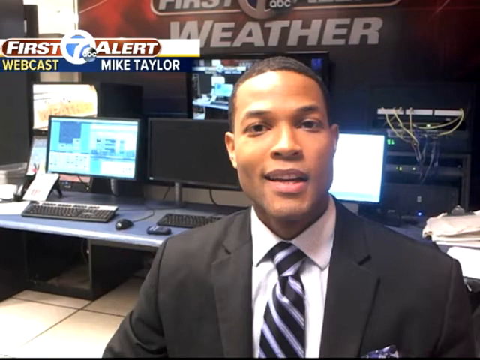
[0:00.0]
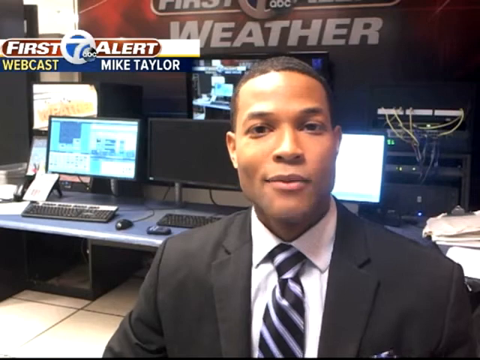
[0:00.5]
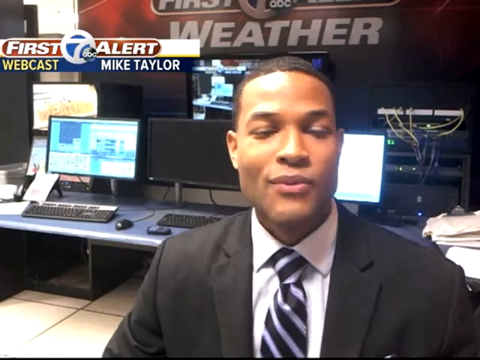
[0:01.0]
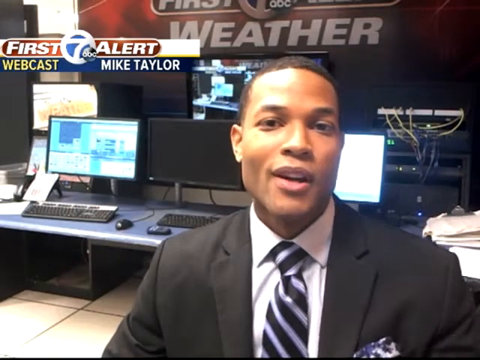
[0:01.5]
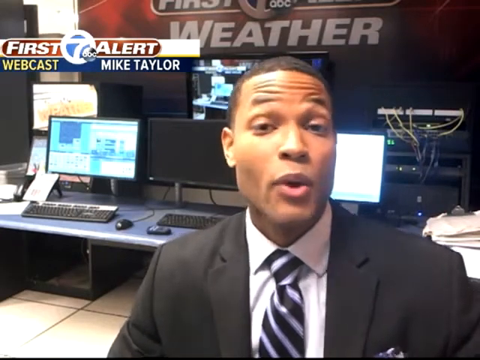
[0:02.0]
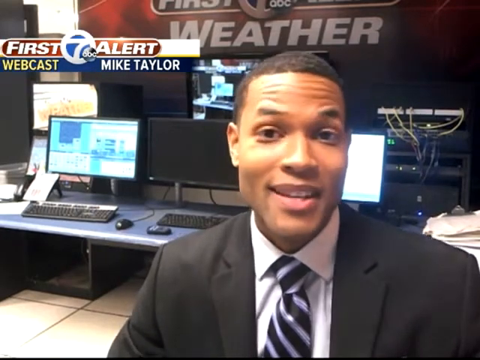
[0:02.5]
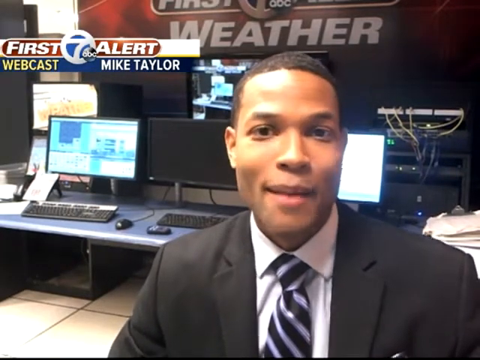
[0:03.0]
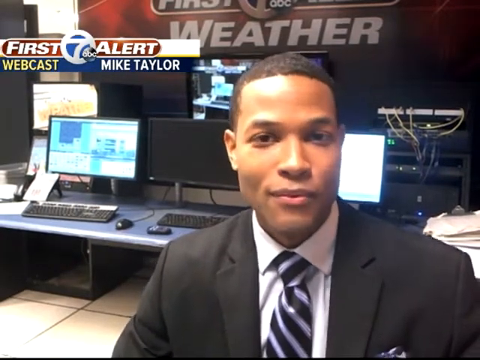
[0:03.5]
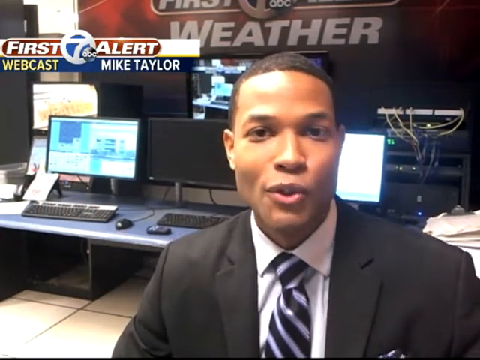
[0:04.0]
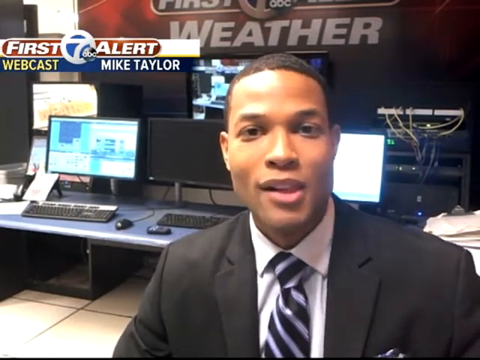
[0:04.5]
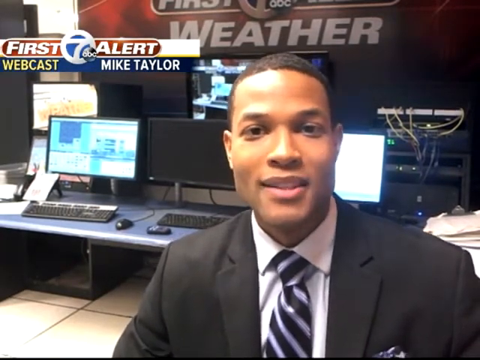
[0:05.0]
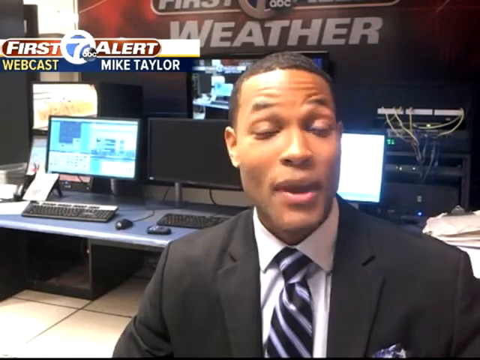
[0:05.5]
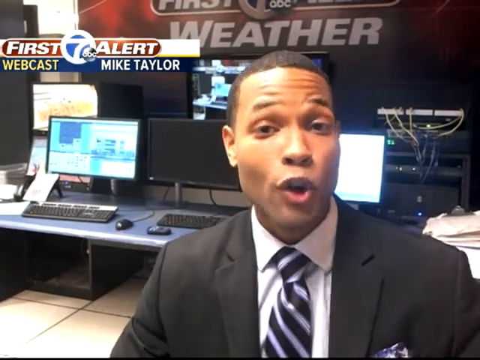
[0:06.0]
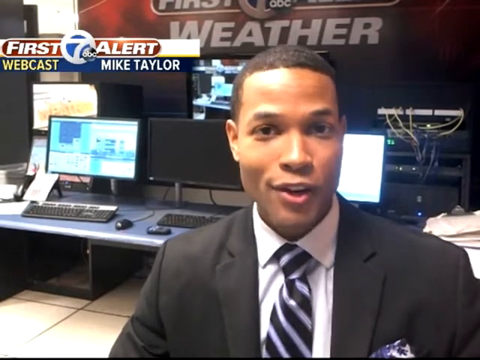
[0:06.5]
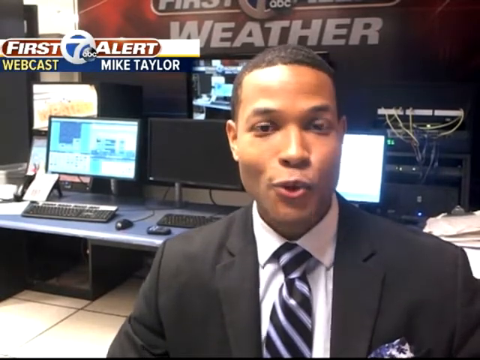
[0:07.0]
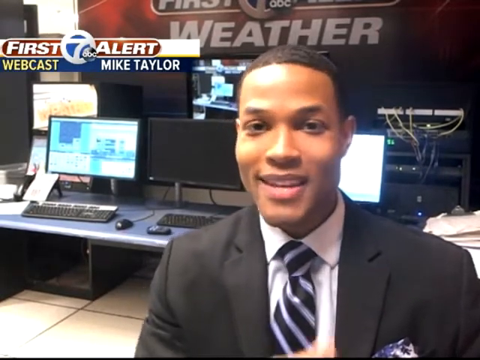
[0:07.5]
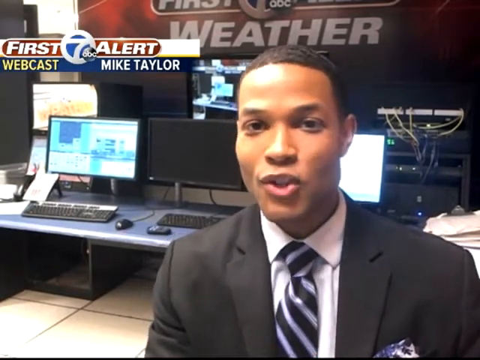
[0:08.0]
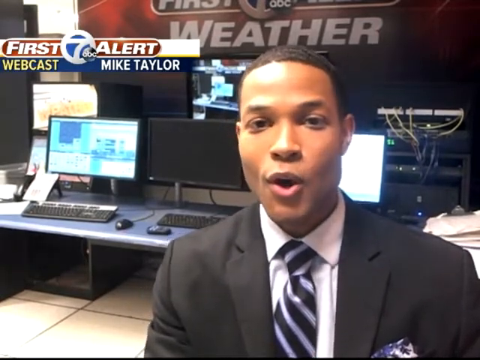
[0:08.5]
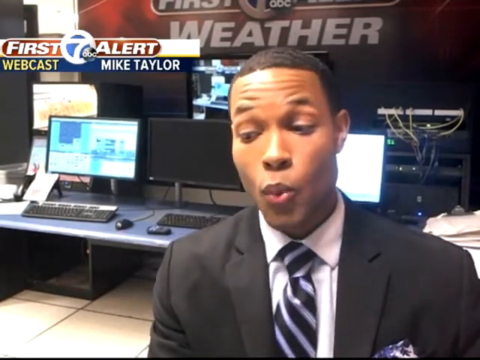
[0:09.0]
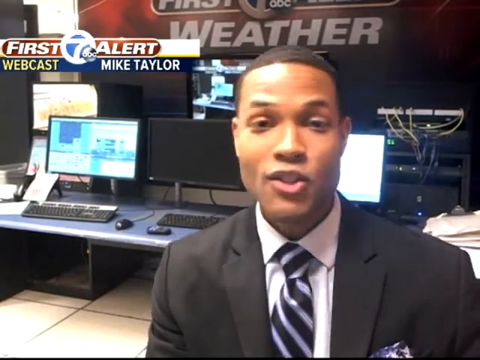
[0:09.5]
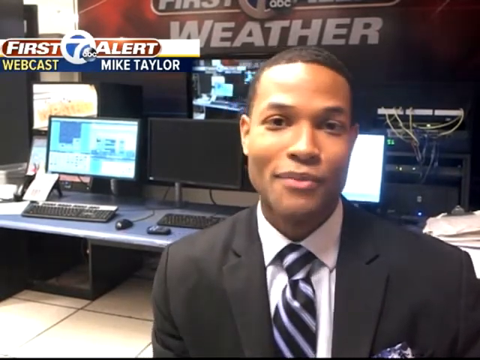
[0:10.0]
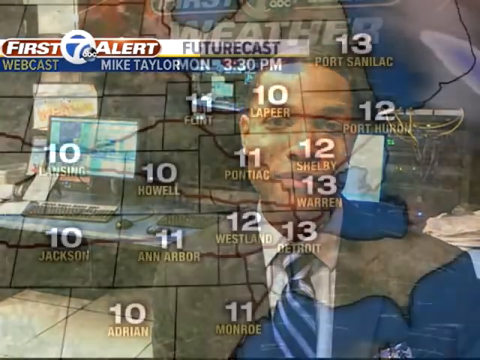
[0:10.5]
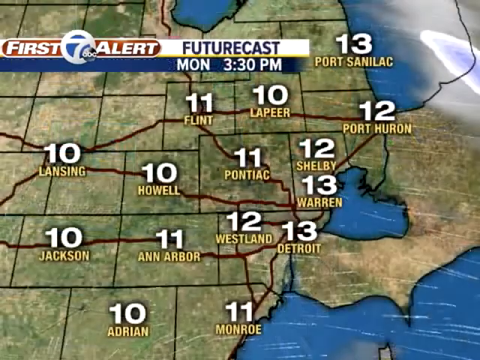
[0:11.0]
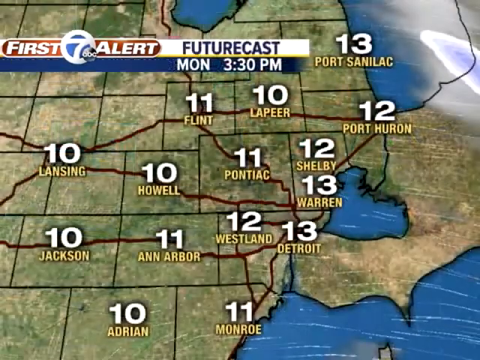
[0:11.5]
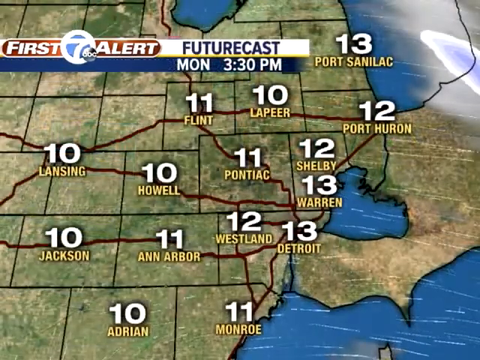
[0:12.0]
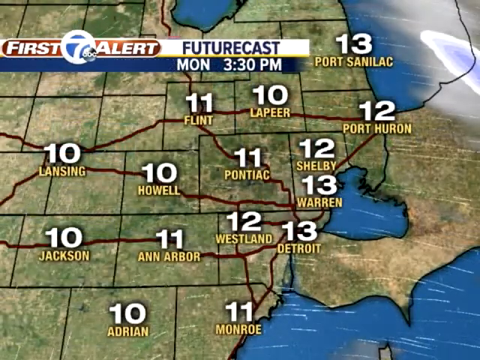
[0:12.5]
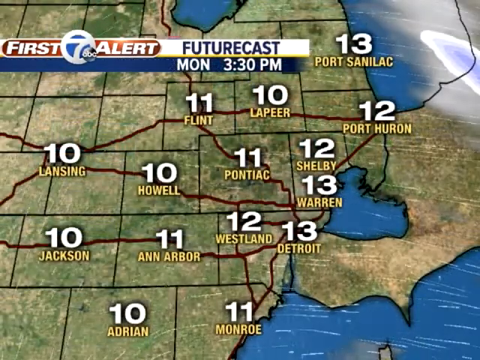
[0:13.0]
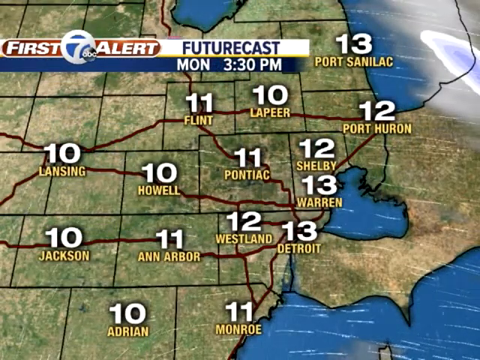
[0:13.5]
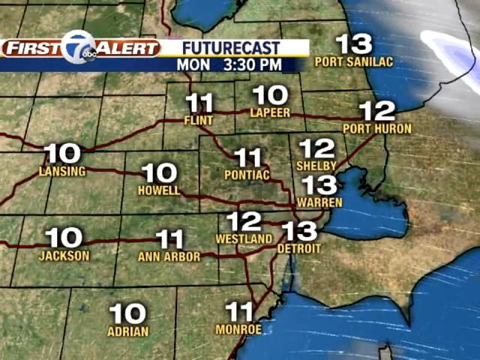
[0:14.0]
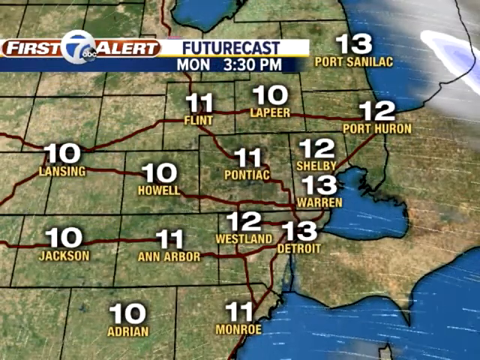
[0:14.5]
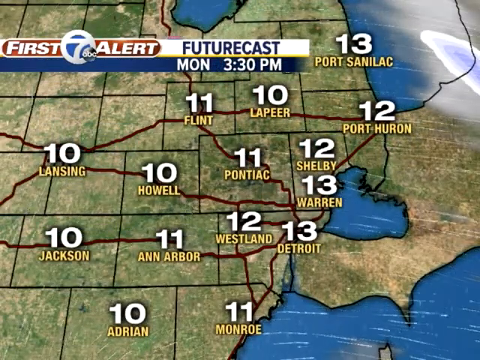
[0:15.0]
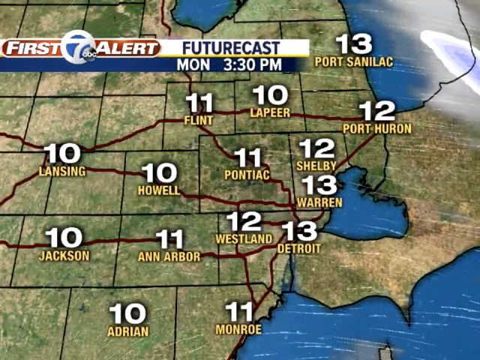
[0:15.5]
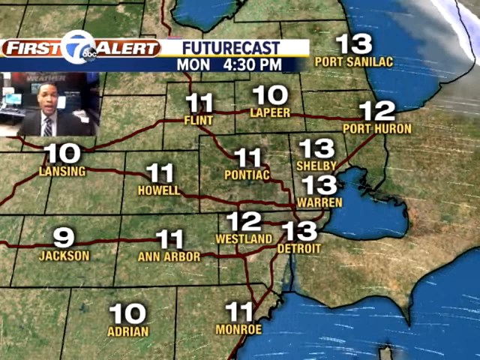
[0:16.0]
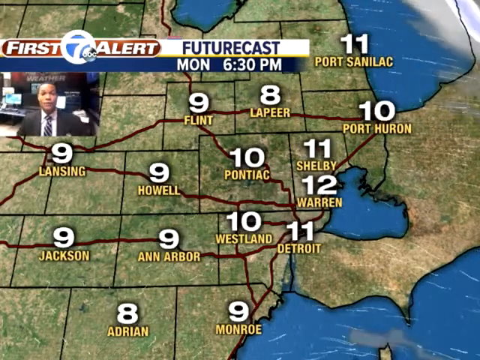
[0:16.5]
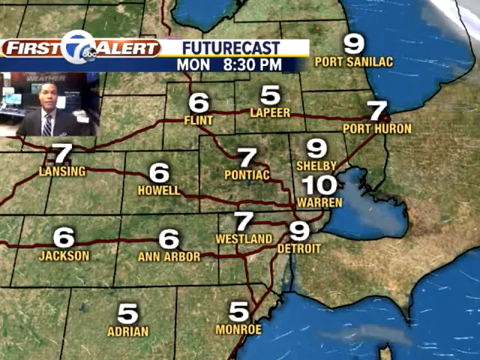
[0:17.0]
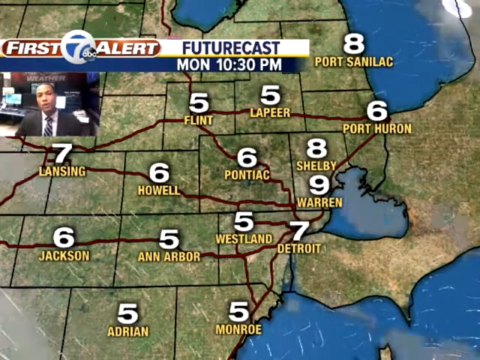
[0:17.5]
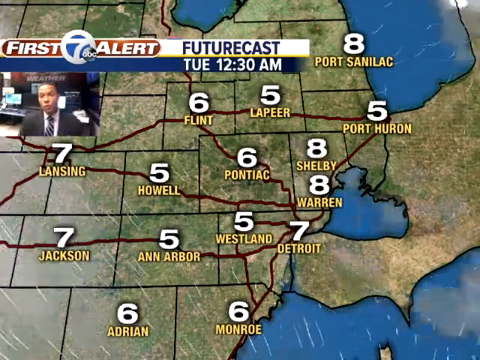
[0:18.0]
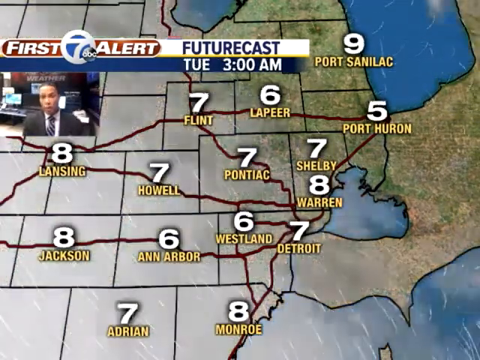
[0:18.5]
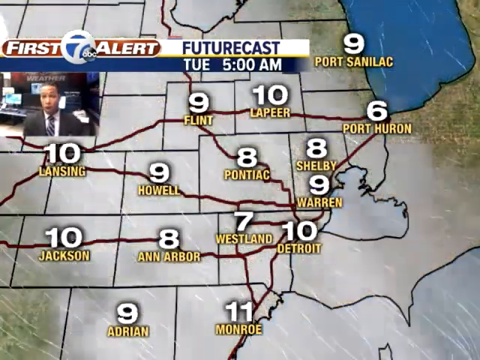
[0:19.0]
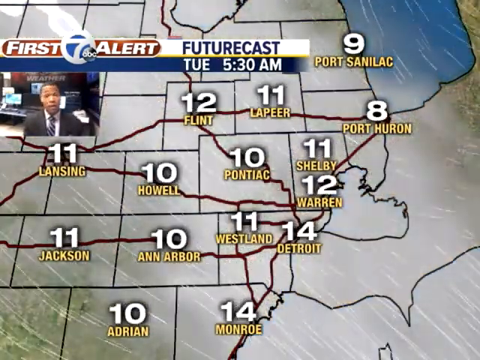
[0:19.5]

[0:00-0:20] The video comes from a program called First Seven Alerts on the TV channel ABC, presented by Mike Taylor, a young, clean-shaven Black man formally dressed in a black suit. He seems quite serious, judging by his facial expressions. In the background there are about seven laptop screens. The video transitions to show the predictions for the coming days. For Monday at 3:30 pm, temperatures are low, ranging from a low of 10 to a high of 13 in Port Sanibac. Graphics on the screen indicate that the wind initially moves in a westerly direction, and later, around 2 or 3 AM on Tuesday, toward the north-west. Clouds cover some parts of the region.